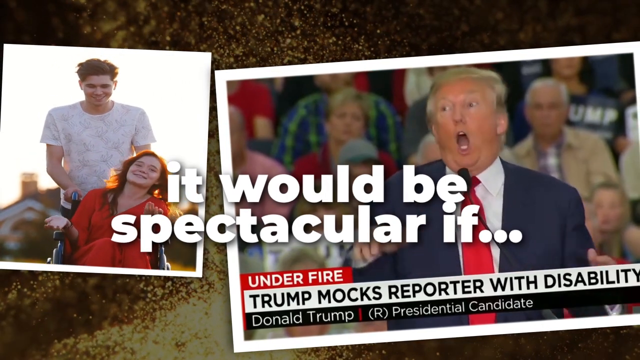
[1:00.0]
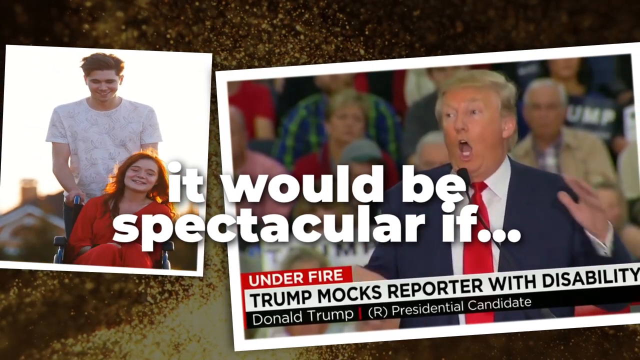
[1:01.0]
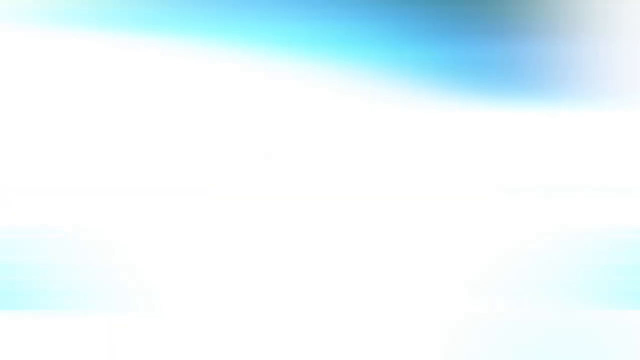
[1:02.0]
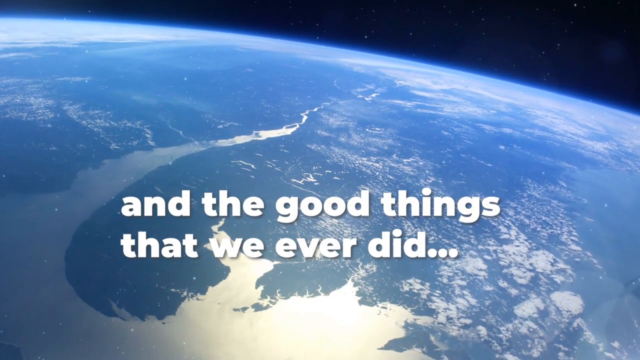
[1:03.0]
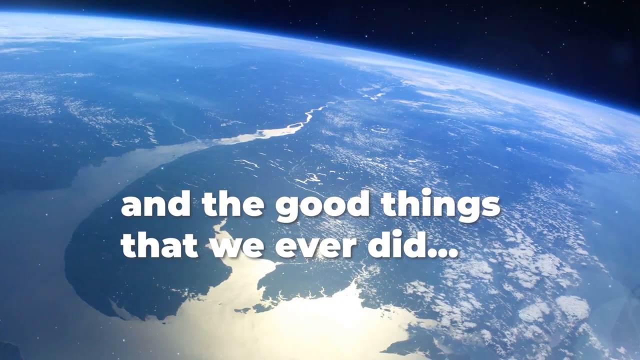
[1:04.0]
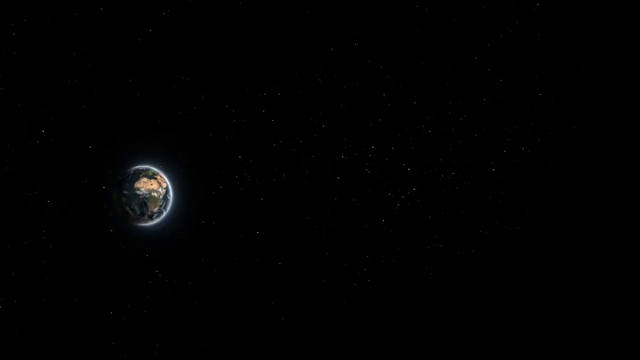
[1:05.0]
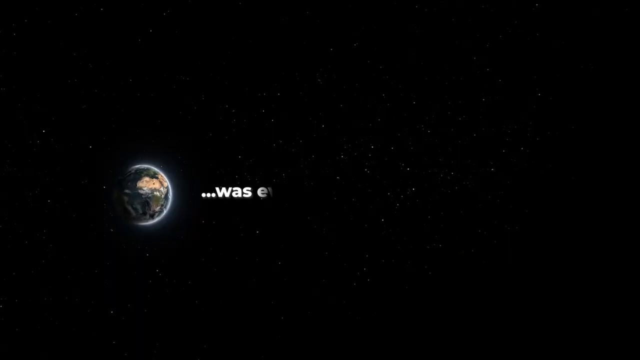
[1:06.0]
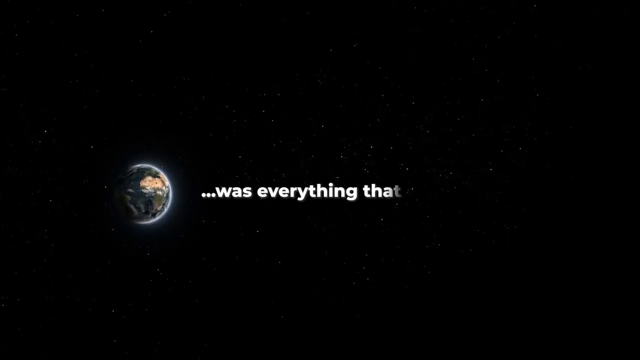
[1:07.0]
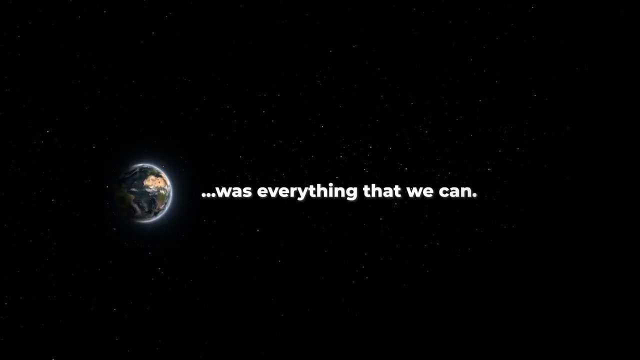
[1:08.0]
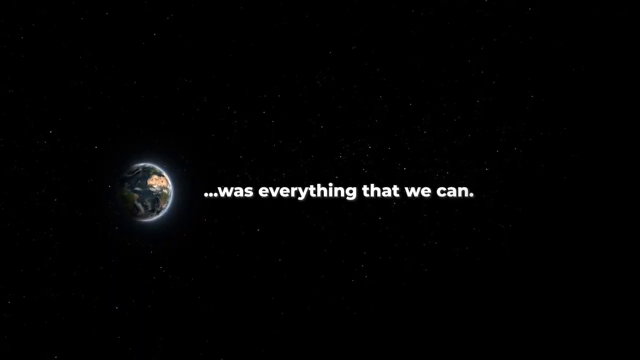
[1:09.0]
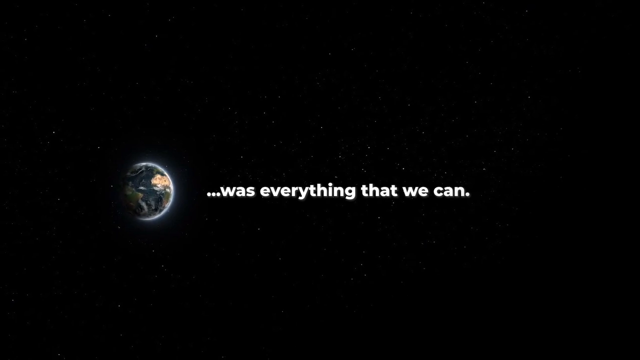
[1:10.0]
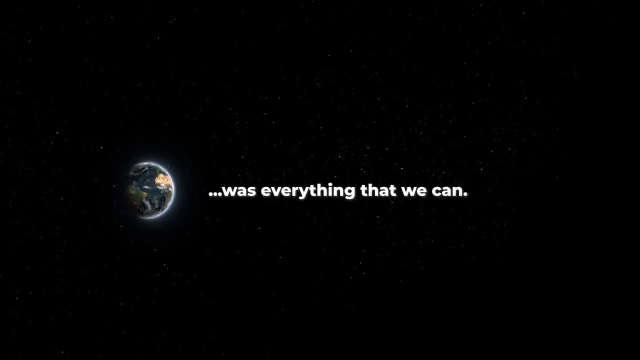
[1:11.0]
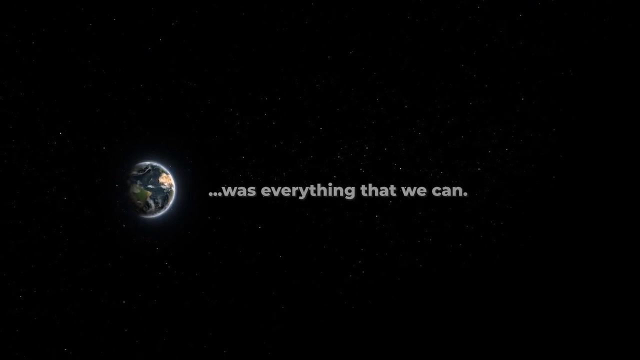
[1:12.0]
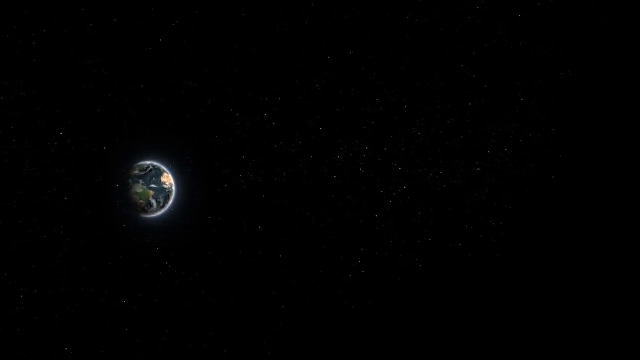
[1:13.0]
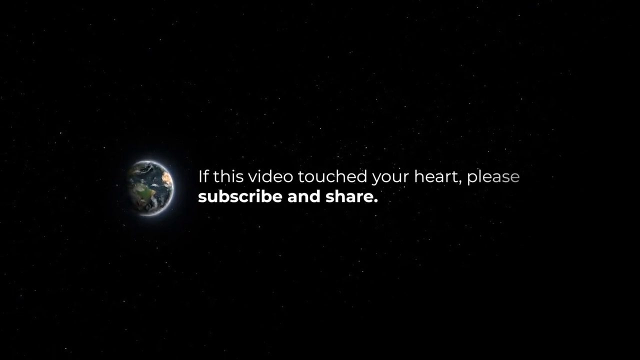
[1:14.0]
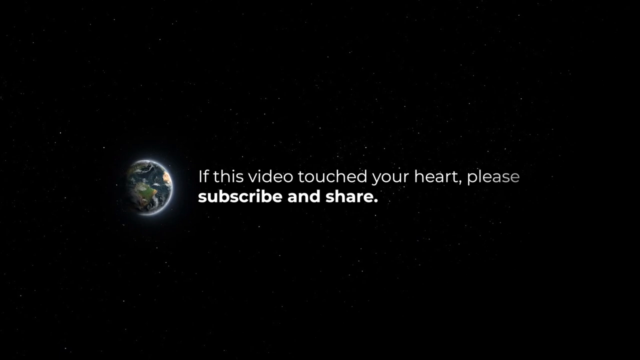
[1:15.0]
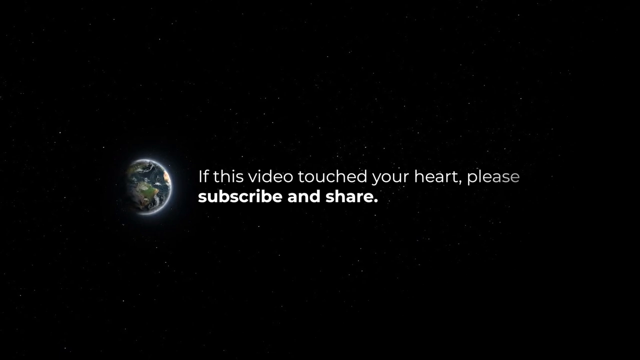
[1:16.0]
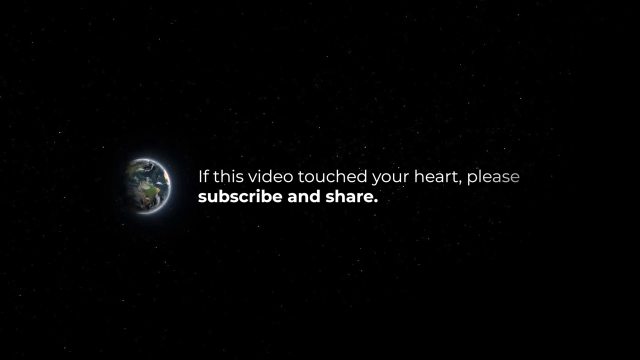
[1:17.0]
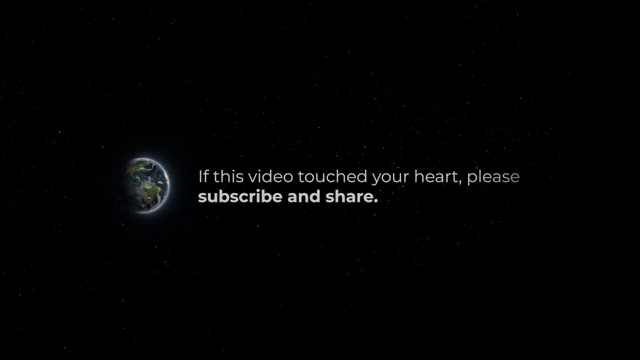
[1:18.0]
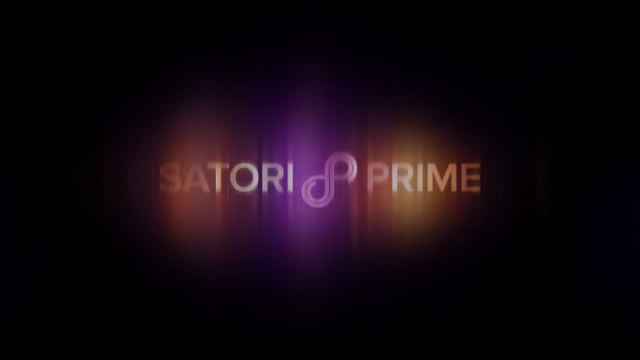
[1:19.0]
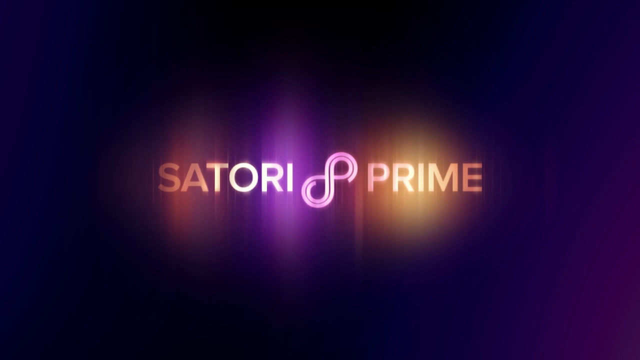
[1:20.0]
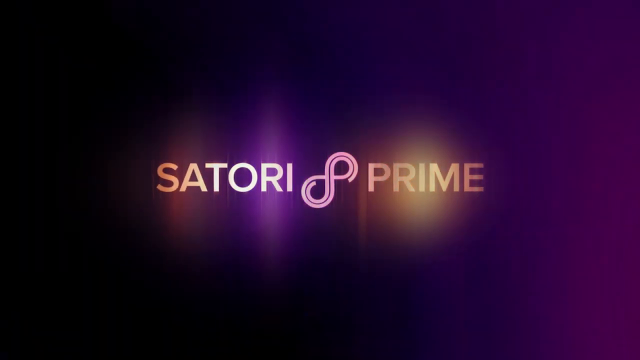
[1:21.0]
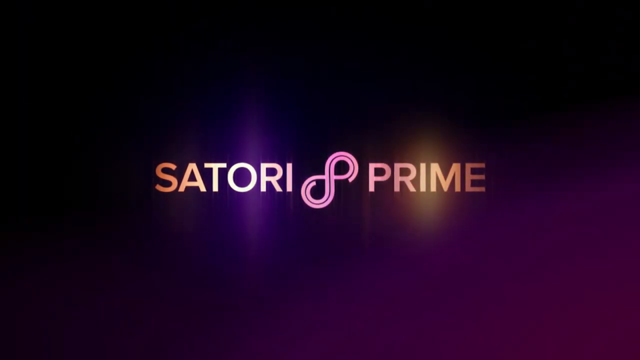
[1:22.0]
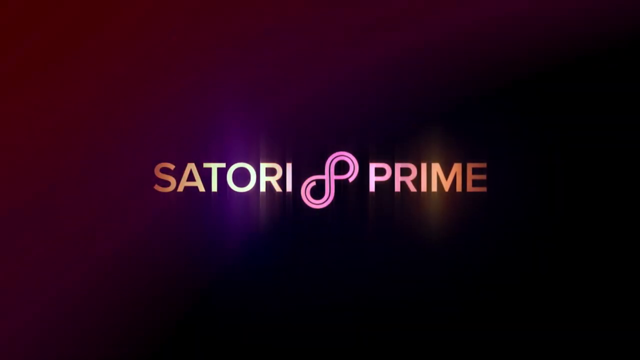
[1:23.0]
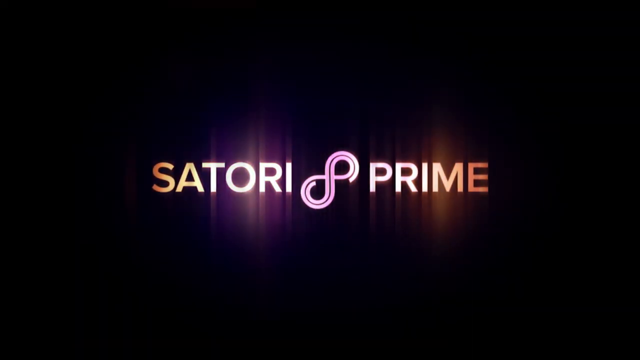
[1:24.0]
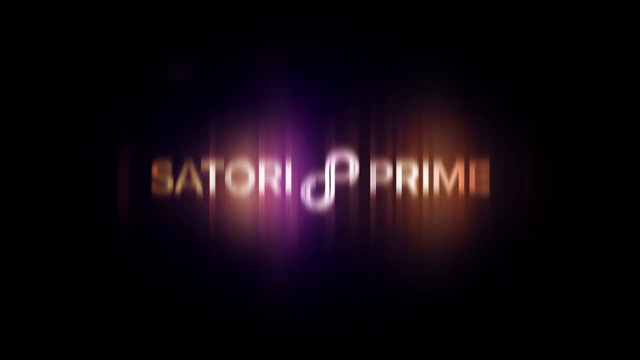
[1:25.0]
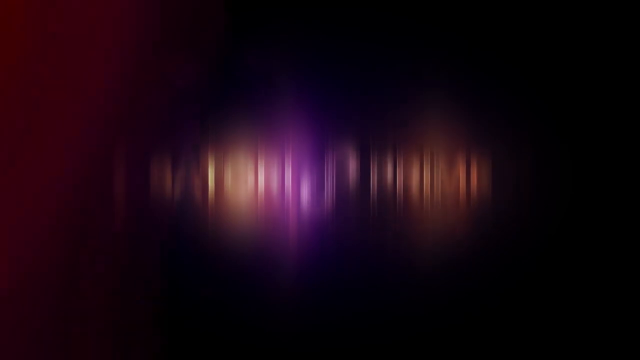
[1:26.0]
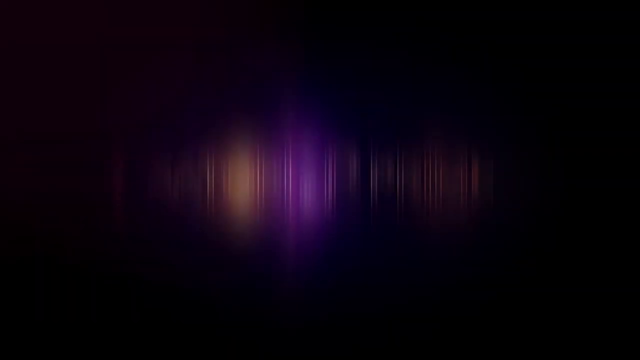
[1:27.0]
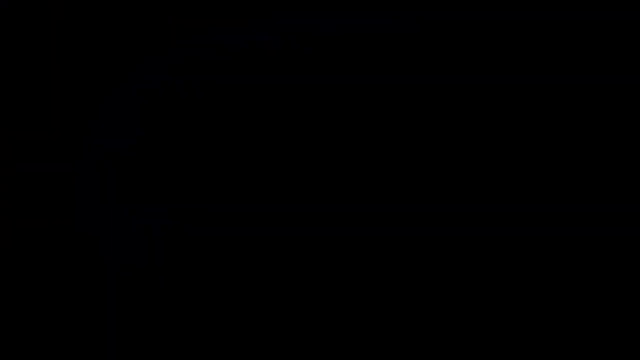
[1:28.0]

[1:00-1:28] A slightly angled clip with a white border shows Donald Trump, his mouth a bit more open. Text reads "Under fire, Trump mocks reporter with disability", and under that it says "Donald Trump presidential candidate". On the left-hand side are two people: a male wearing a white t-shirt and, underneath, a woman wearing red in a wheelchair, whom the male is pushing. Large white text in the centre overlays everything, reading "it would be spectacular if...". The background appears to be some kind of yellow dots. Next is a space shot of the Earth with the horizon in the top right and text reading "and the good things that we ever did...". This transitions to a new scene of the Earth, very small and centre left, with a whitish outline on its right-hand side. More text appears, saying "was everything but we can". The text and the Earth zoom out, the text disappears, and more text appears saying "if this video touched your heart please subscribe and share". A transition leads to a logo with "Satori" and "Prime" on the right-hand side. In the middle is a double-layered figure 8 angled 45 degrees to the right-hand side. Behind the lettering is orangey, purple and yellow lighting, and in the background purple, blue and black lighting moves around. The logo blurs and disappears, then the video fades to black.